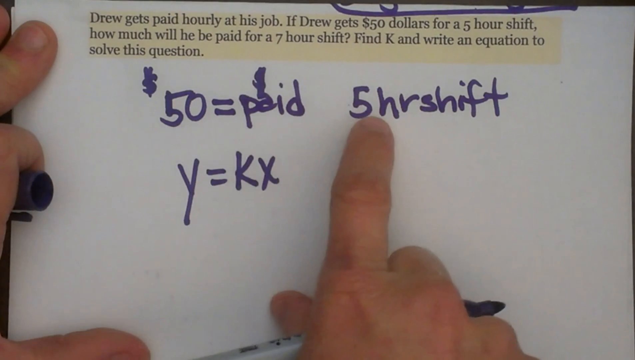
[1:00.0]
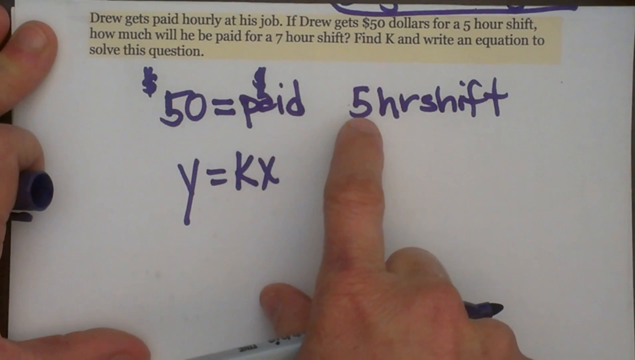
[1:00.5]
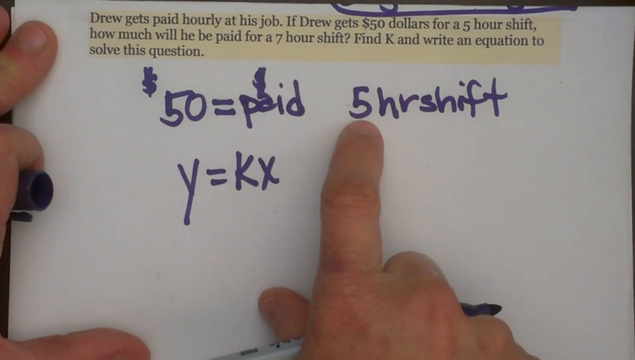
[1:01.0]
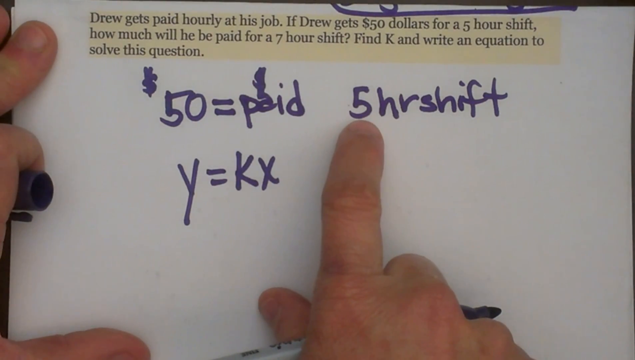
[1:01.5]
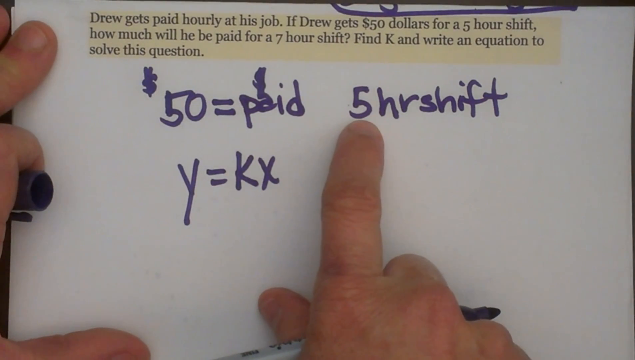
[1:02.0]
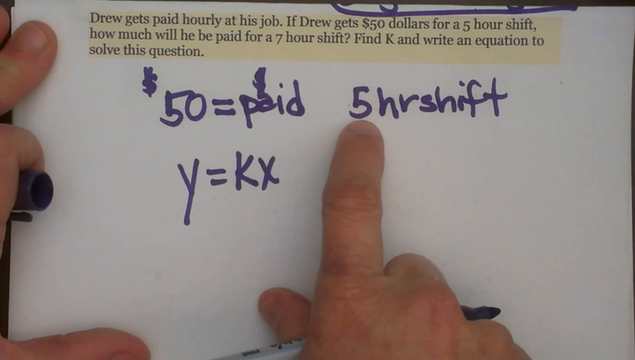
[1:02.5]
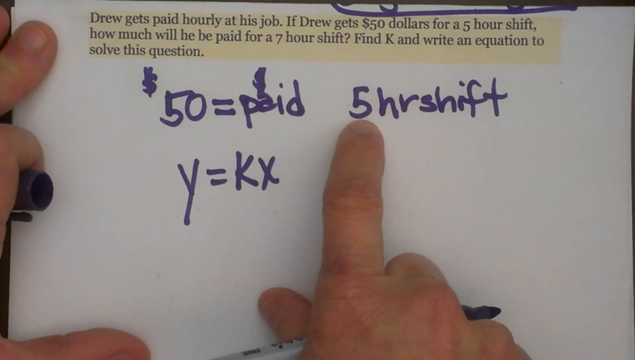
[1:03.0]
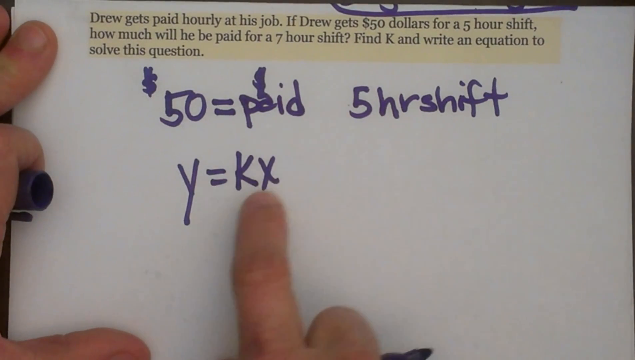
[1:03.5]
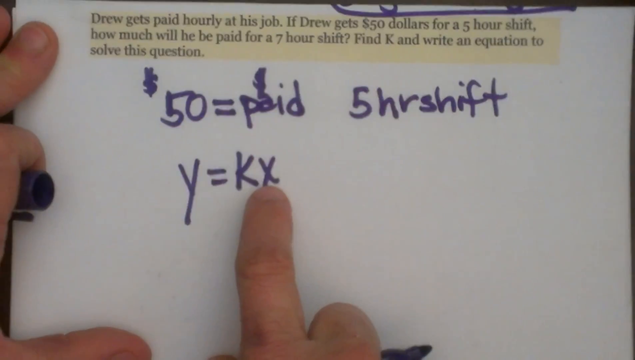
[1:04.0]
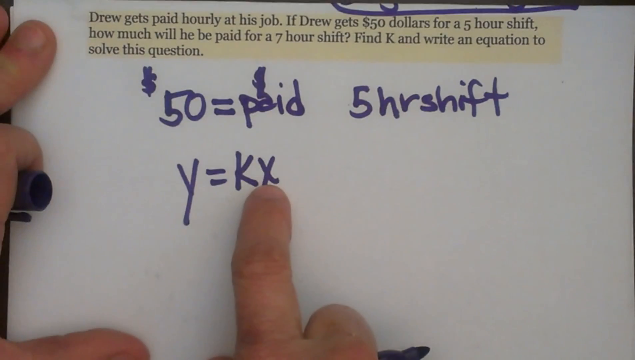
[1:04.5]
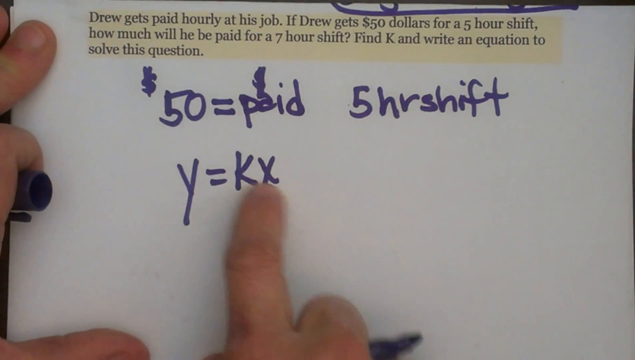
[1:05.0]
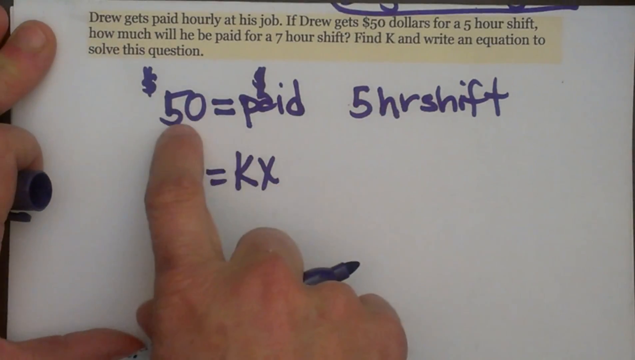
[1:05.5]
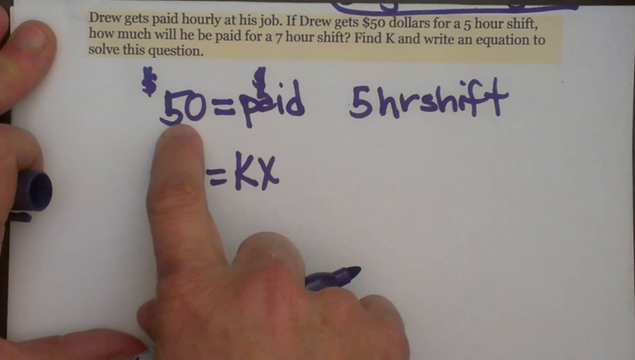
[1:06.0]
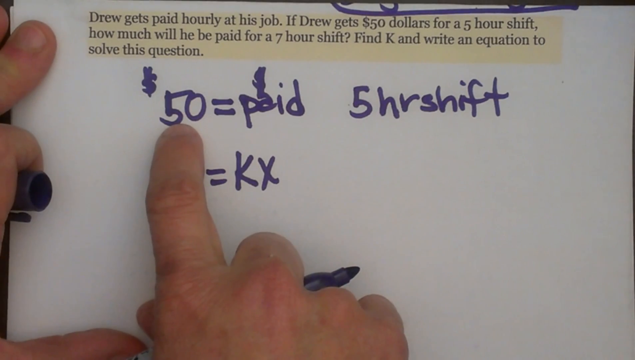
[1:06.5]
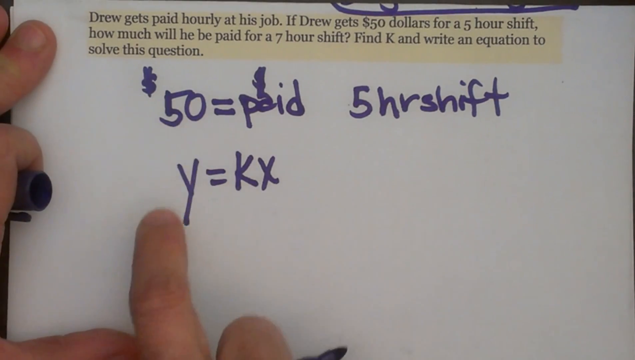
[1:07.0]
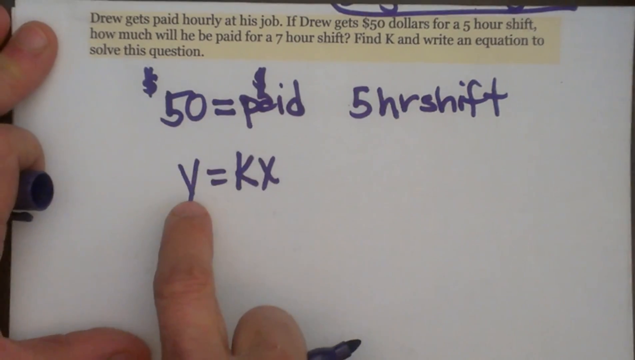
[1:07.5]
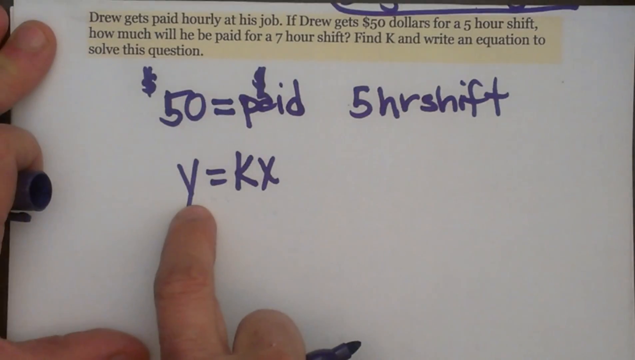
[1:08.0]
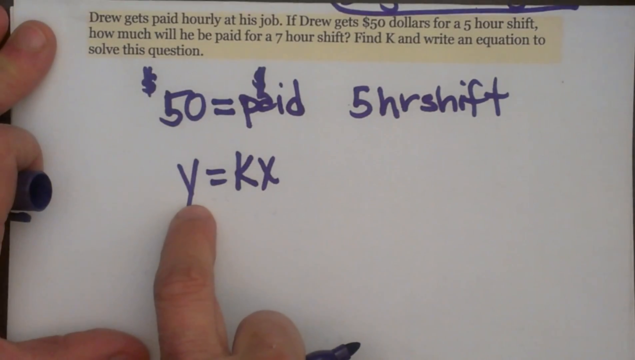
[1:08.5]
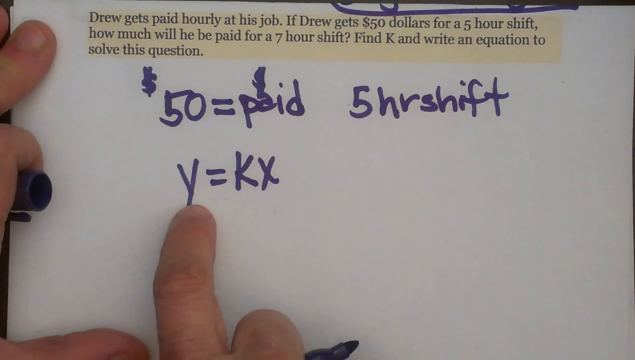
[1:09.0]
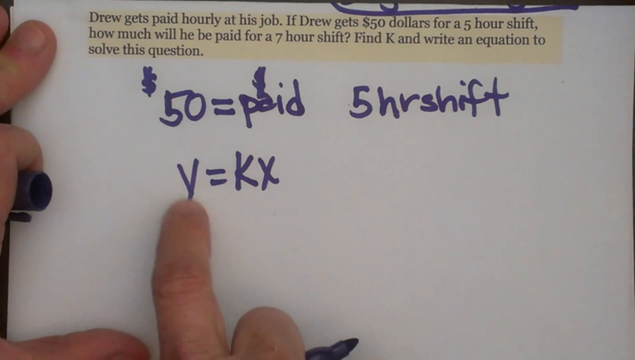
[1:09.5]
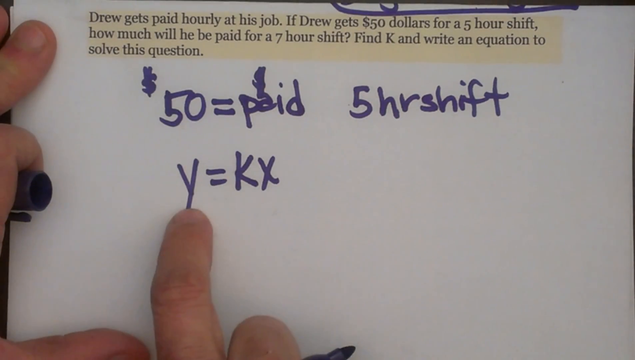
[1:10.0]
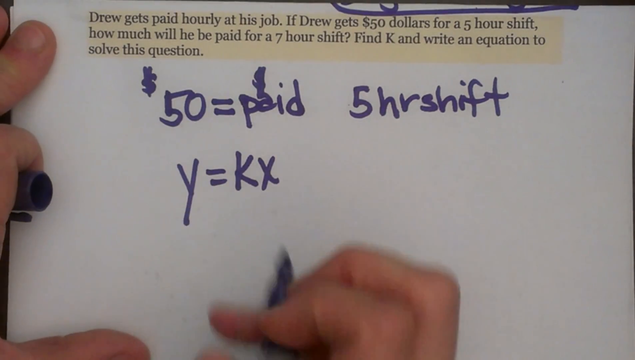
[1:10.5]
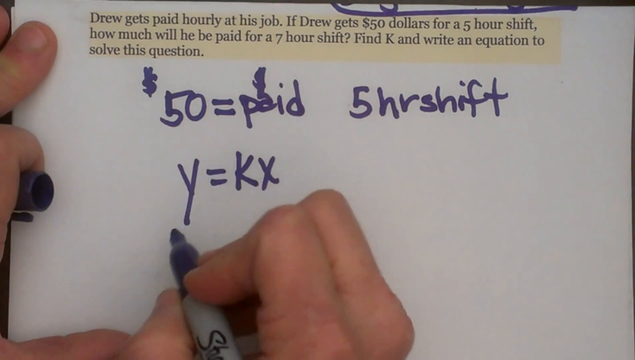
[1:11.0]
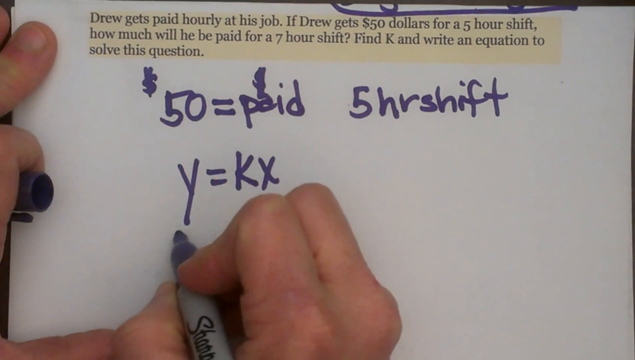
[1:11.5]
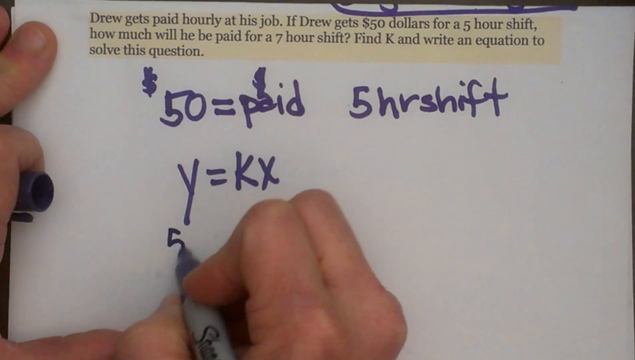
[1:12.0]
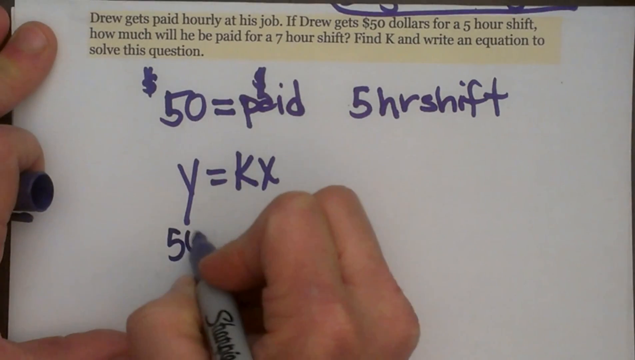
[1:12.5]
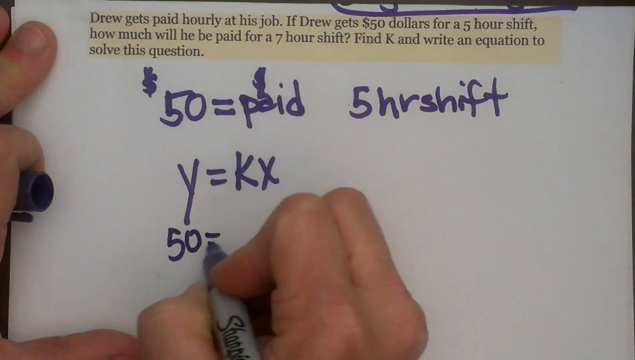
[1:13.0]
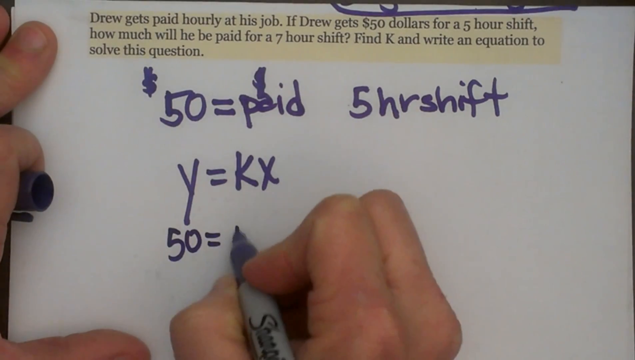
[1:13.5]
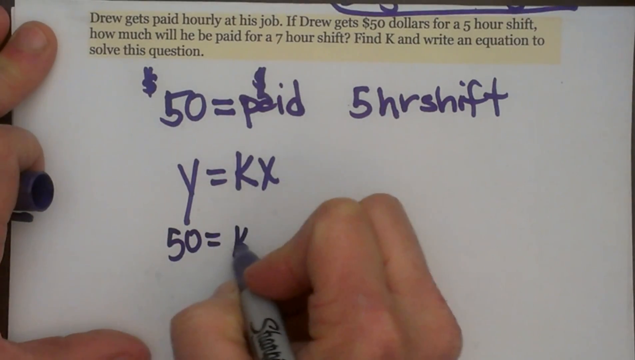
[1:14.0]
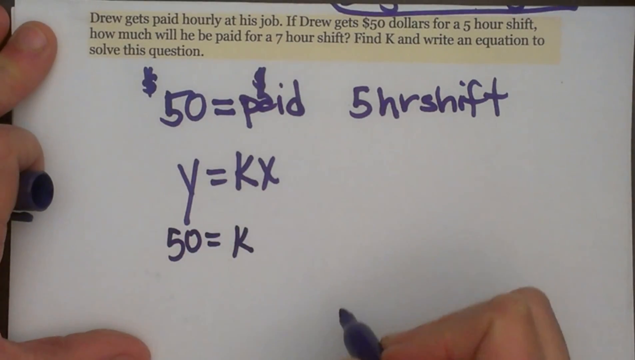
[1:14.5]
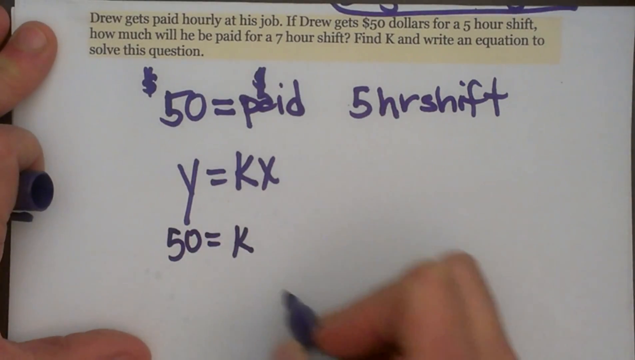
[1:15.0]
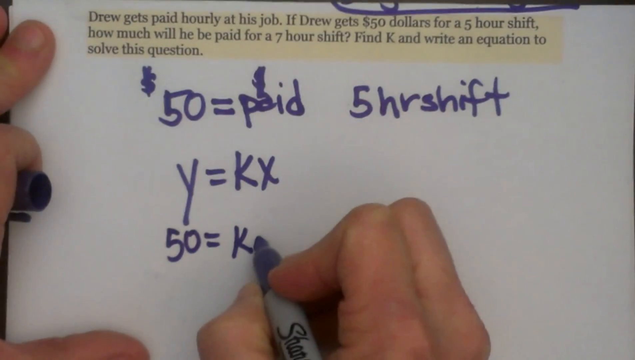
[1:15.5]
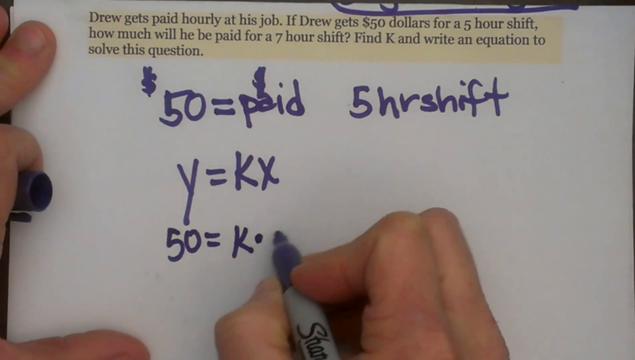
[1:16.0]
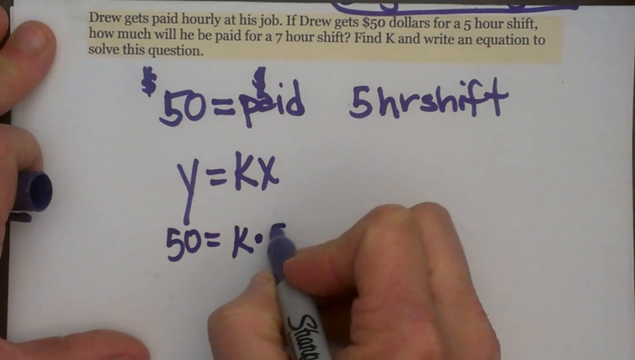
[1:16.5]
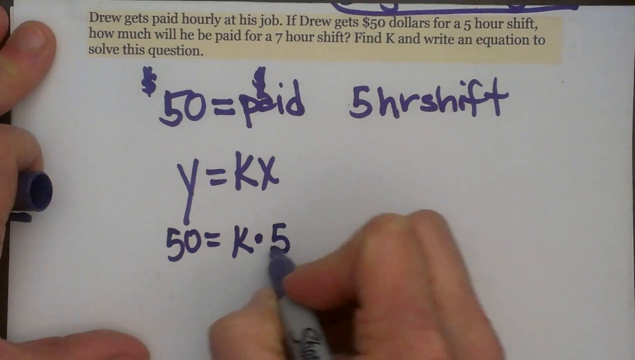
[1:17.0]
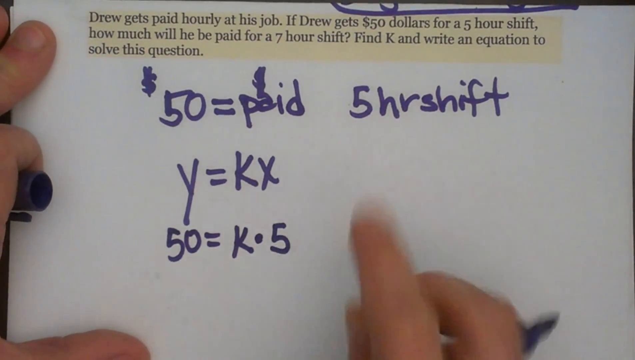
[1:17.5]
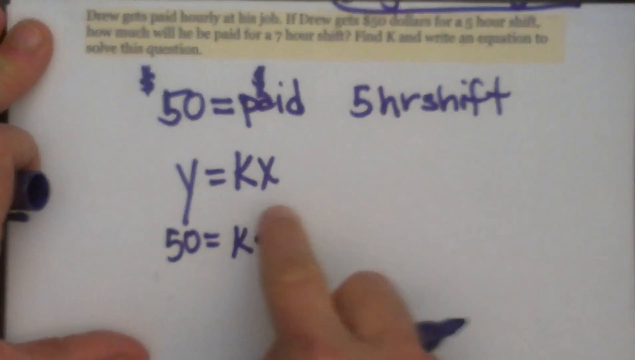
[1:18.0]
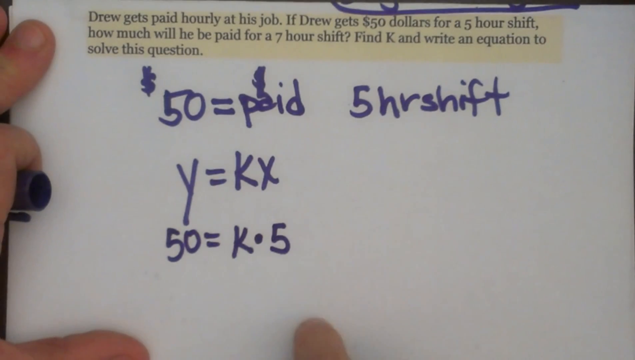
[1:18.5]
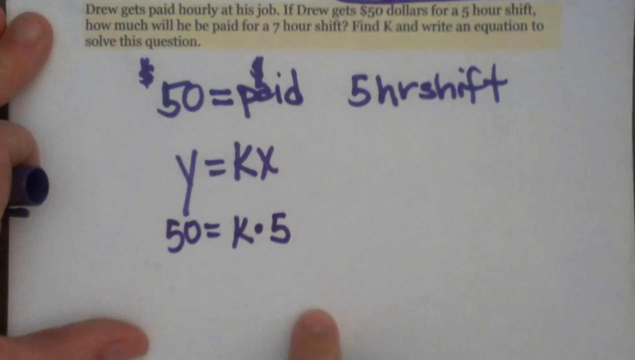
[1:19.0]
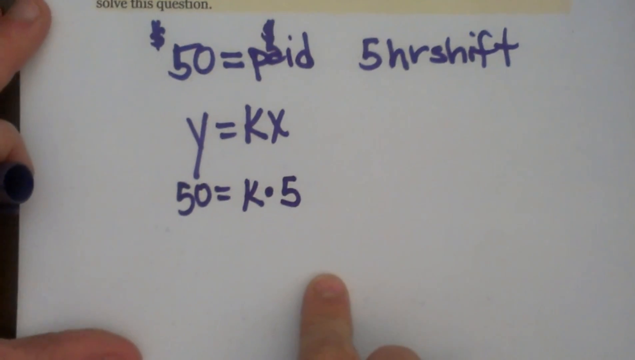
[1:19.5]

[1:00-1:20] An index finger points under the five and then moves to the X, then to the 50, then to the Y. Holding the Sharpie in the right hand, the person writes "50 = K.5" and points to the five-hour shift. On the left side, the left hand appears to hold the piece of paper, with the cap of the Sharpie in the curled-up index finger. At the top is a paragraph highlighted in yellow, and at the very top is a large circle, of which only the bottom is visible, drawn in the same marker used for the Y equation, the five-hour shift and "50 = paid." The person keeps a finger on the paper while moving from equation to equation, holding the paper with the left hand all the while.